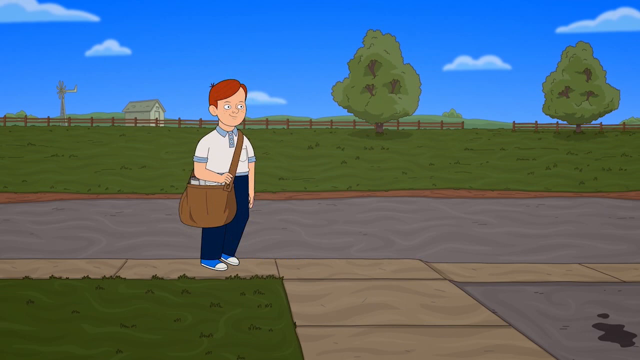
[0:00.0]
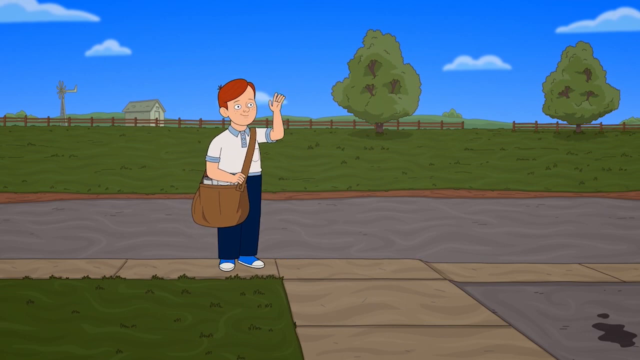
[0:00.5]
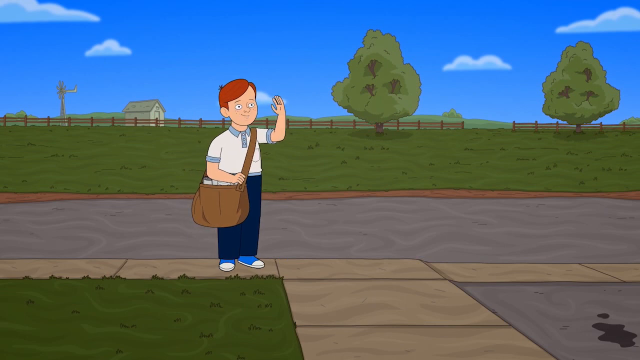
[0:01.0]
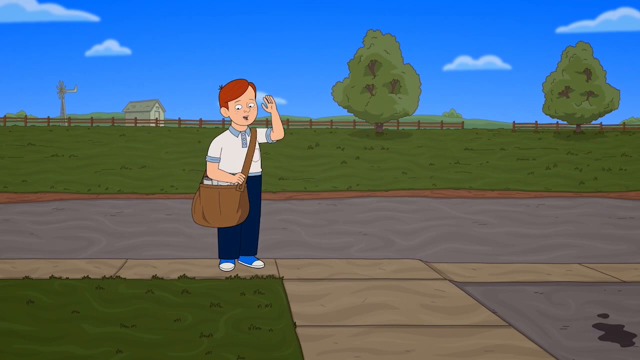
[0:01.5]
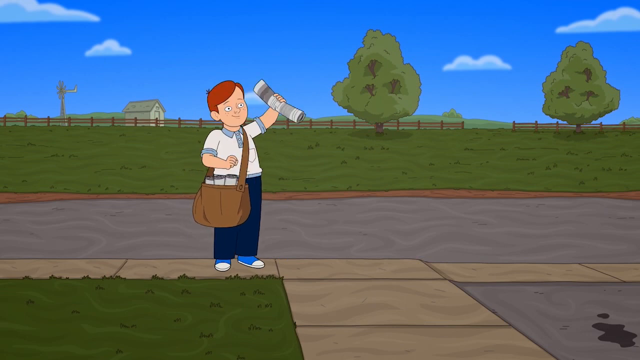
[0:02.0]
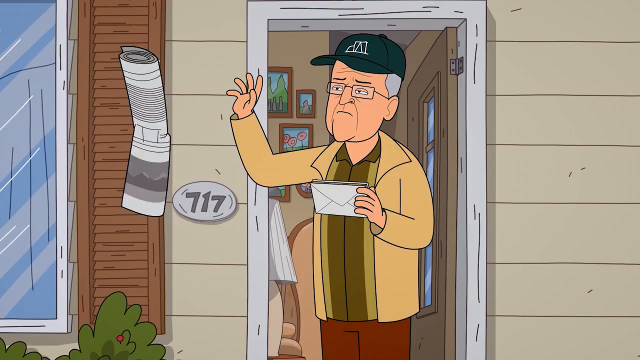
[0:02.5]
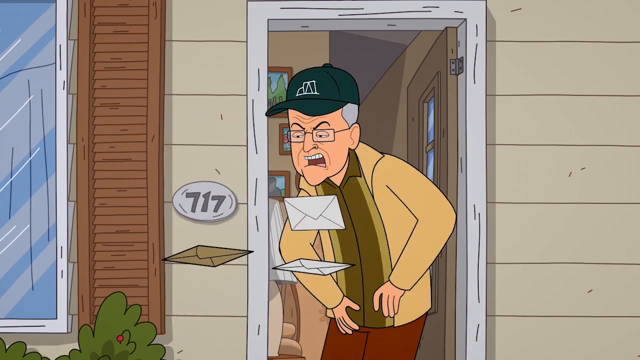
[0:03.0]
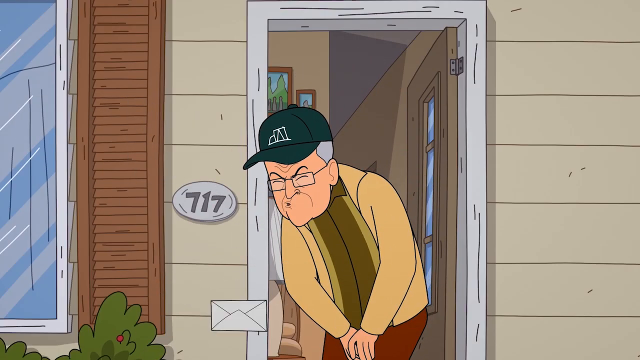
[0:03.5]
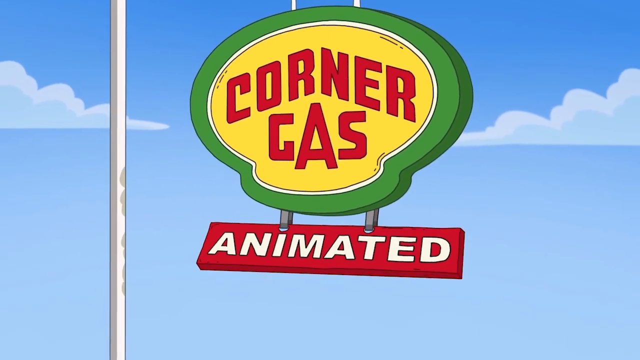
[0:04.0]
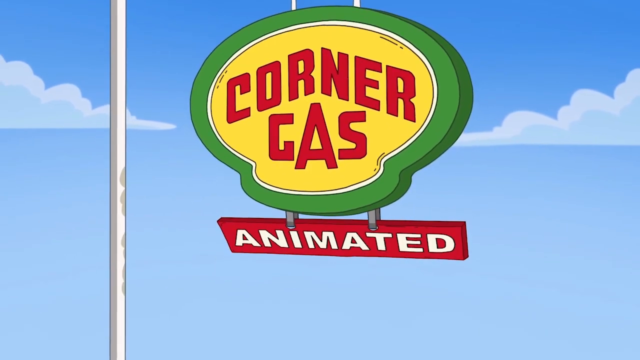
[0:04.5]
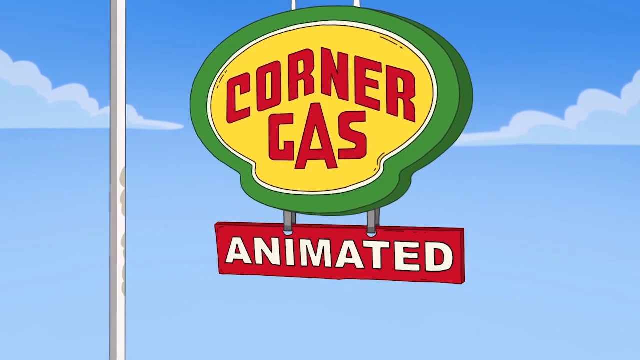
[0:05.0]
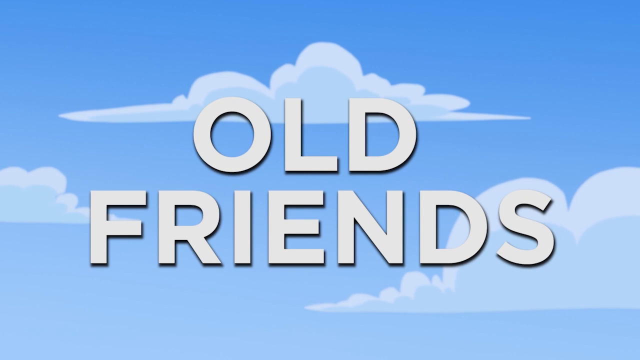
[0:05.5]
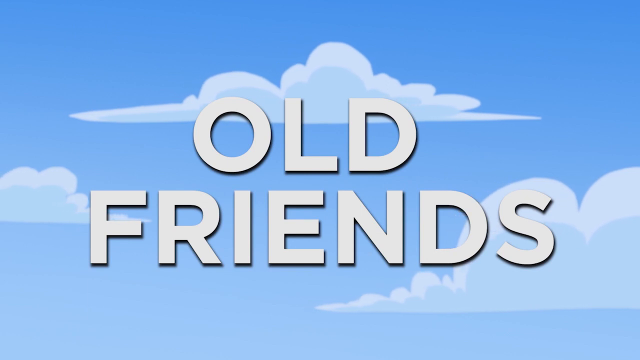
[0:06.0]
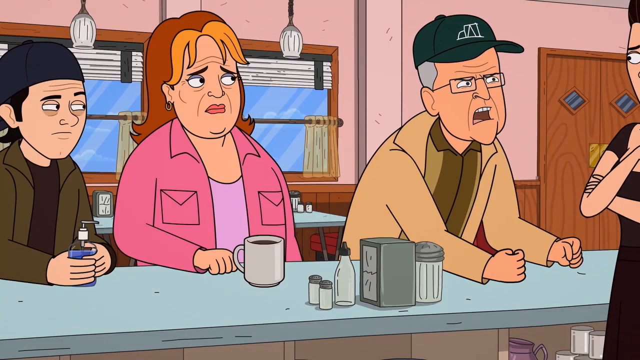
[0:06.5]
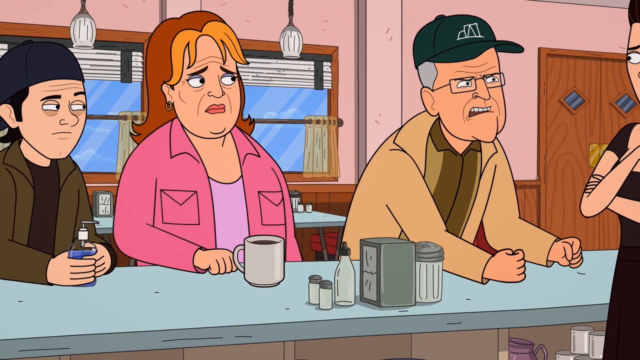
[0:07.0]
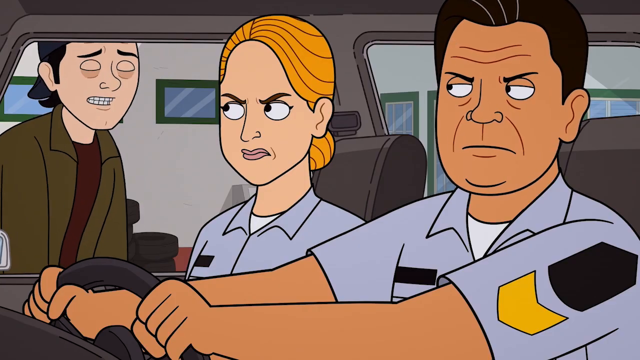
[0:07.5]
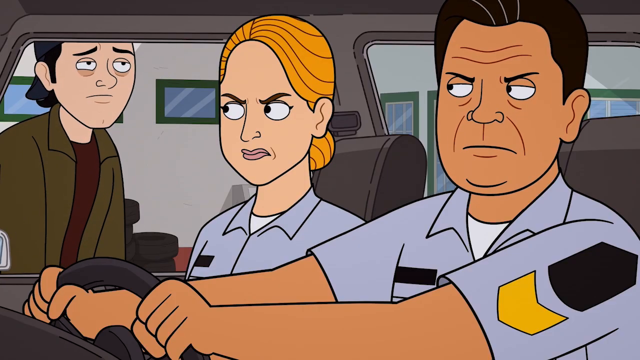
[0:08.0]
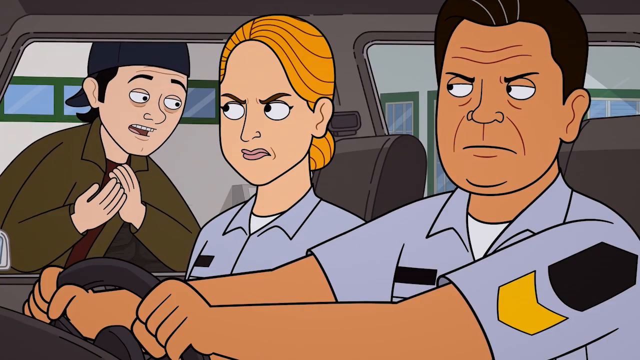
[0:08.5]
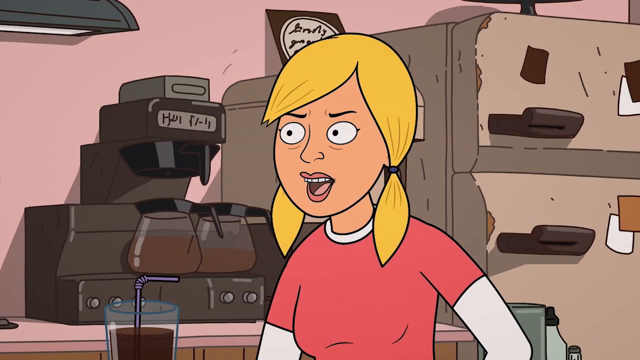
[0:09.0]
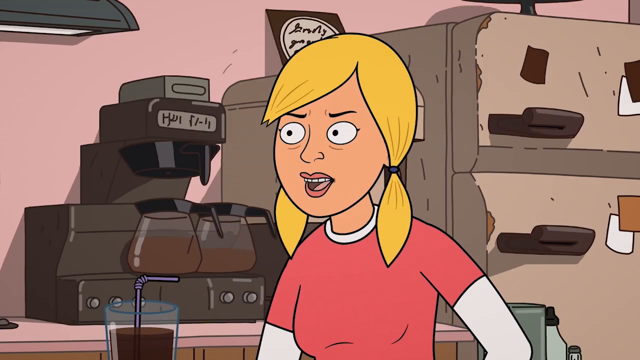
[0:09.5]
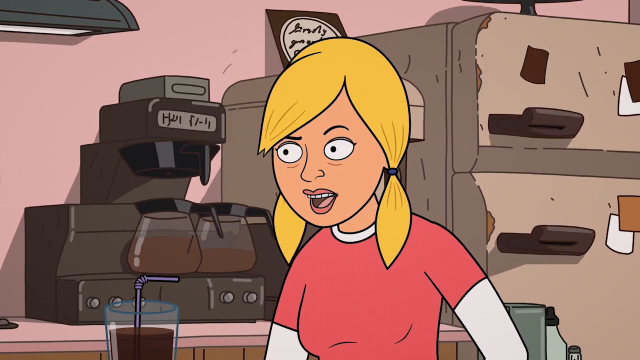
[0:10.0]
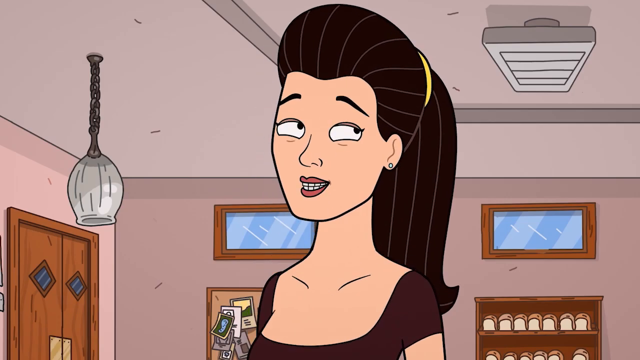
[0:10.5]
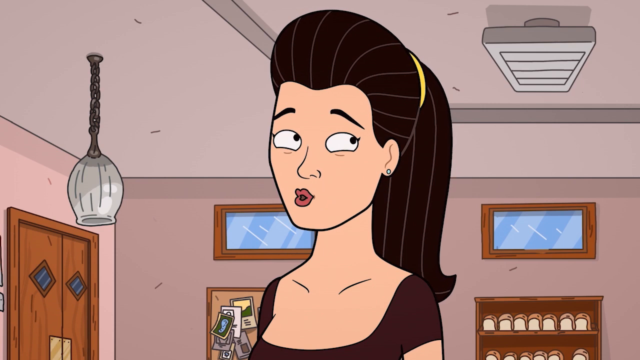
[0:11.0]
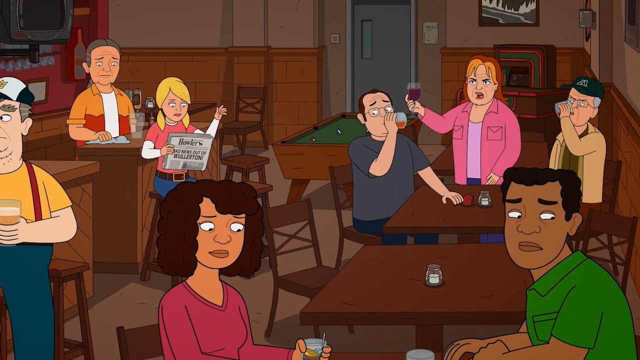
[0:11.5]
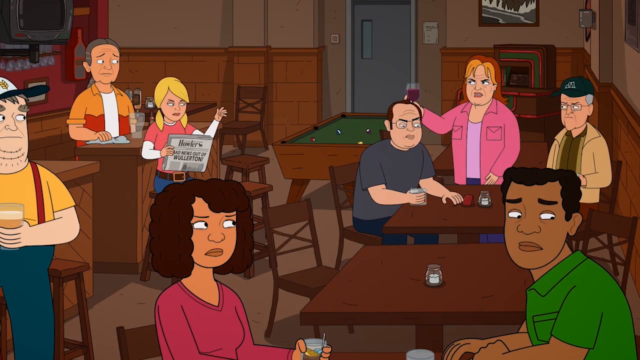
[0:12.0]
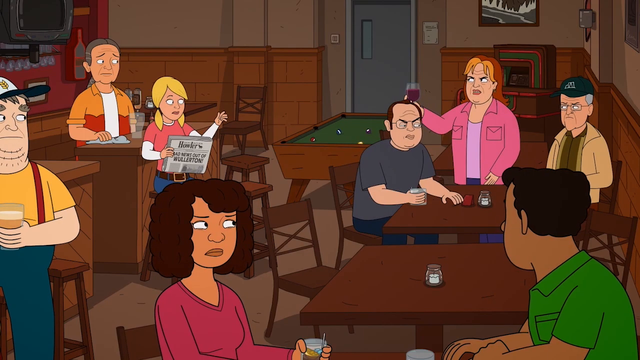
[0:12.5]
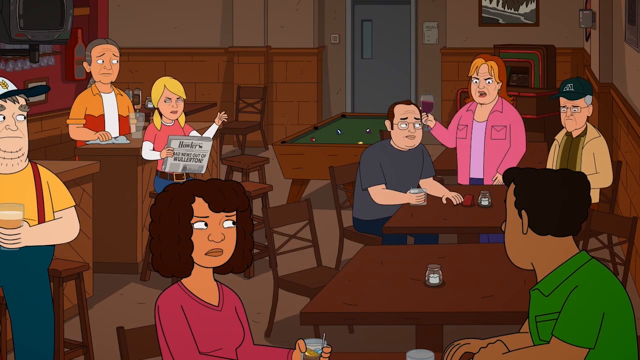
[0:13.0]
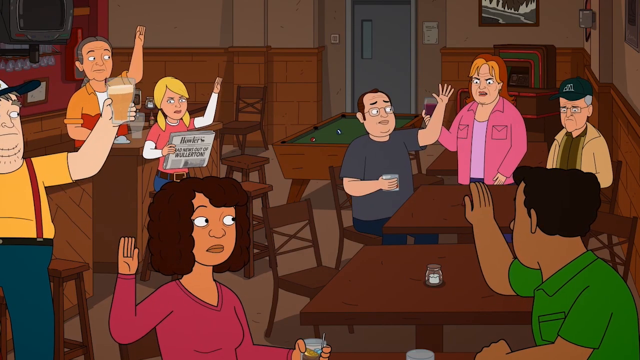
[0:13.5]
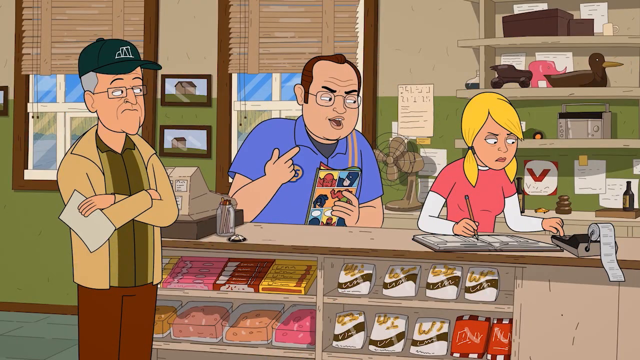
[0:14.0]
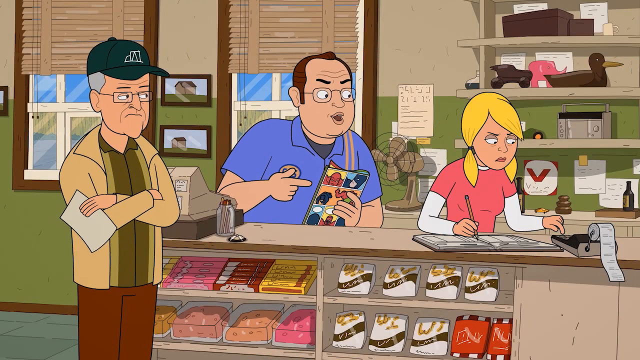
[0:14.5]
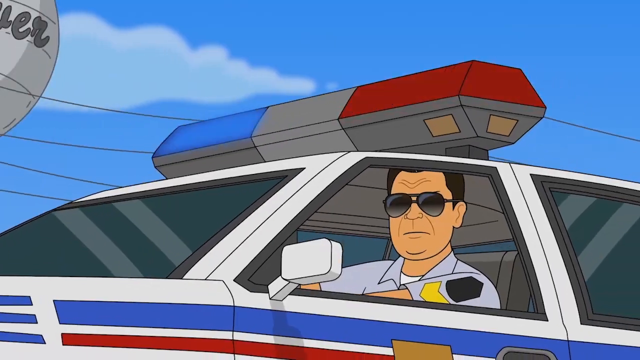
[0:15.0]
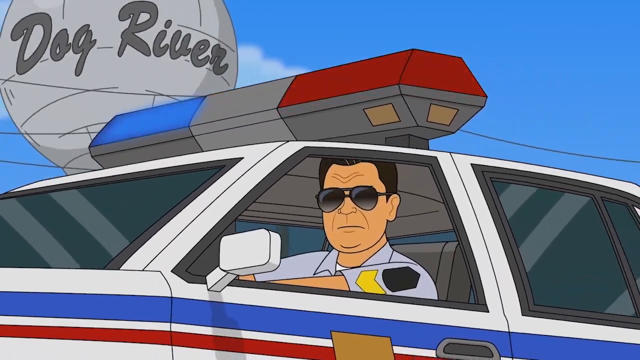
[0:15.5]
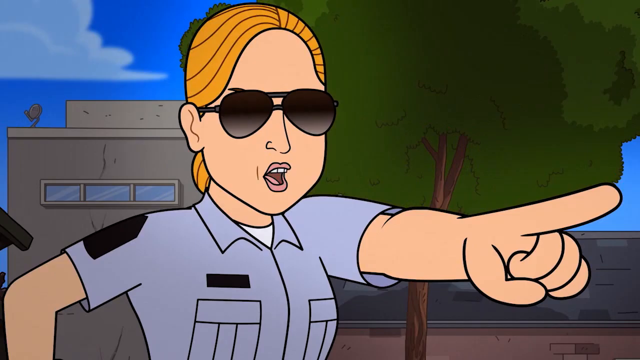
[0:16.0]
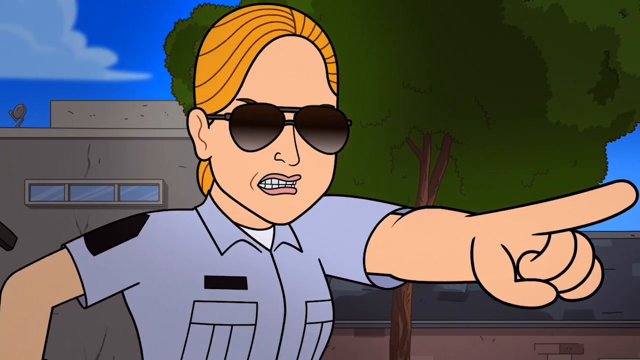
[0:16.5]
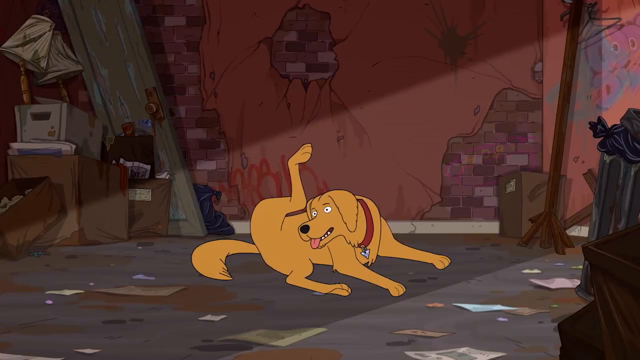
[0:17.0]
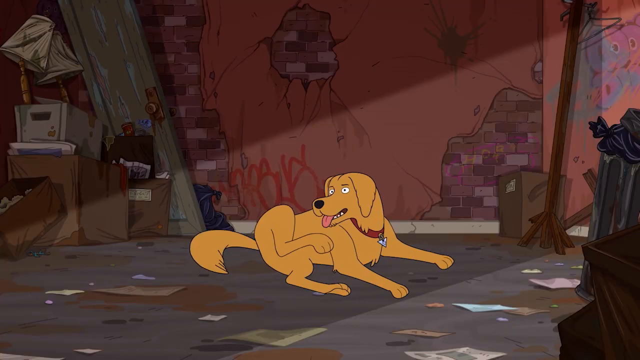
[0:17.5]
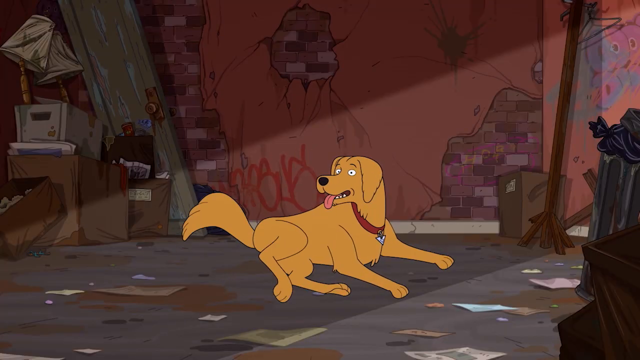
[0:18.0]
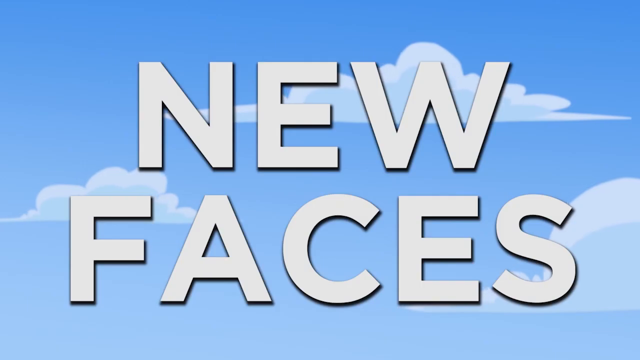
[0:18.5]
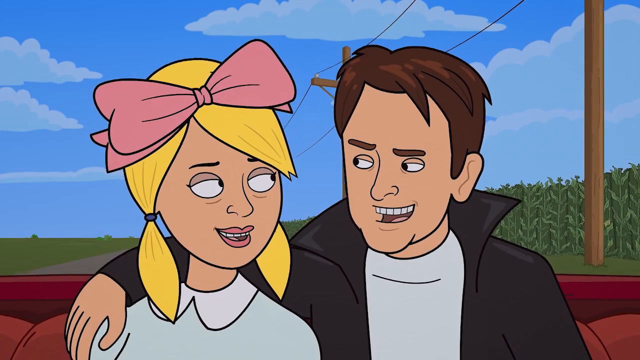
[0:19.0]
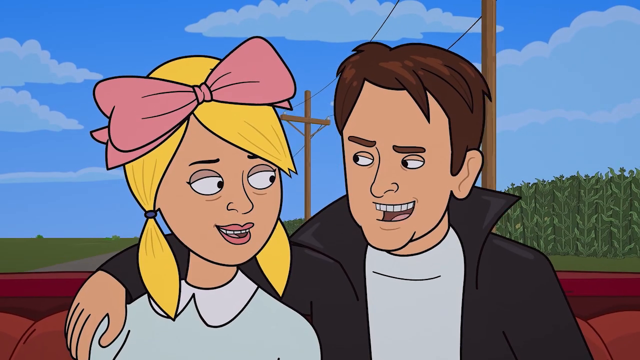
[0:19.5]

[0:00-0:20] A cartoon character with a bag slung over his shoulder walks along a sidewalk; behind him are a couple of trees, a road, grass, a small house and a blue sky. He waves towards the camera and throws a newspaper, and the shot cuts to the paper hitting an older man, who drops his mail. Next comes an animated sign reading "Corner Gas Animated" with the title "Old Friends". A group of three people sit at a restaurant bar with one person behind the bar, followed by two police officers in a car looking at a man standing outside. Another shot shows a woman talking, and a bar with a number of people drinking, one of whom seemingly makes a toast. Other scenes include a police car driving, a dog, and a title screen with the text "New Faces".